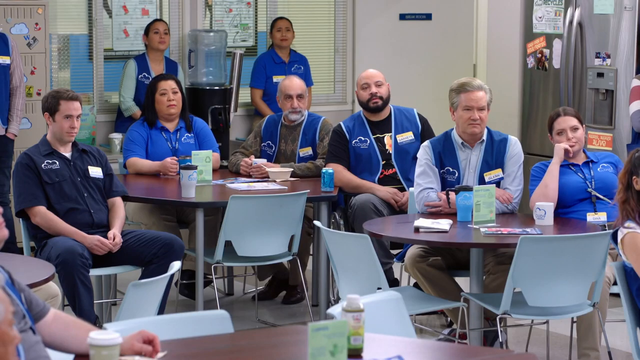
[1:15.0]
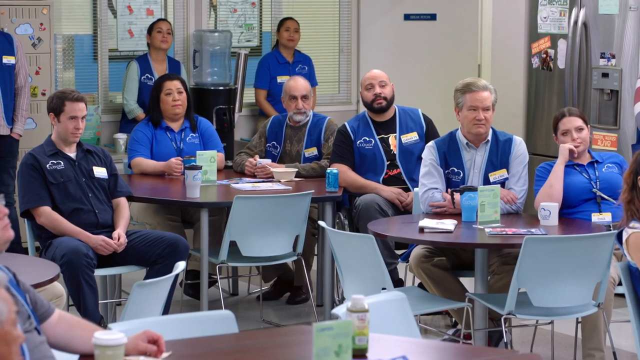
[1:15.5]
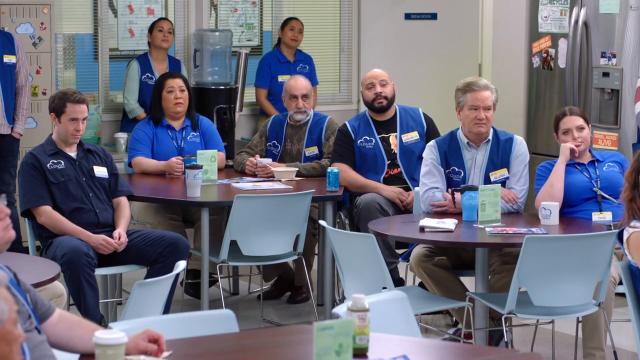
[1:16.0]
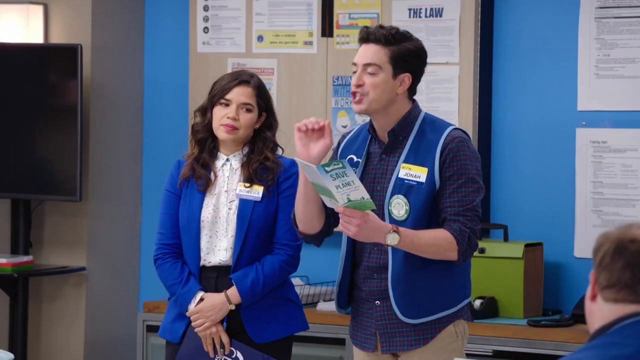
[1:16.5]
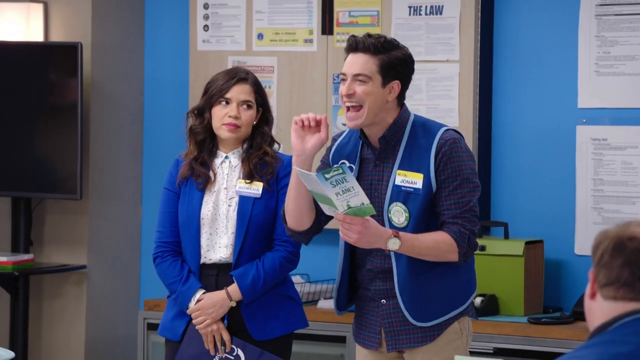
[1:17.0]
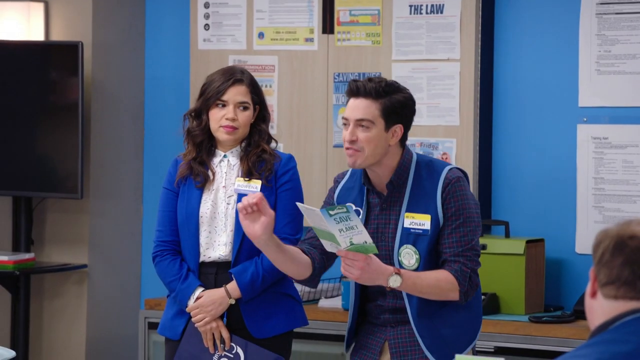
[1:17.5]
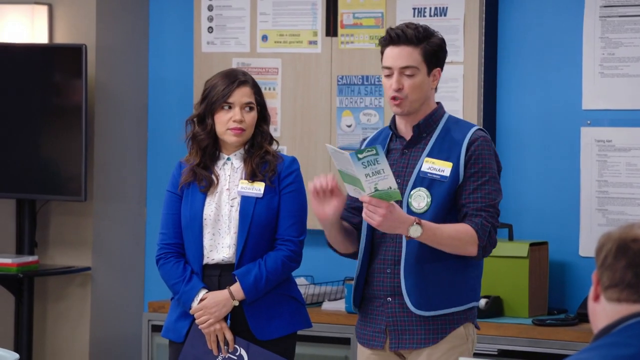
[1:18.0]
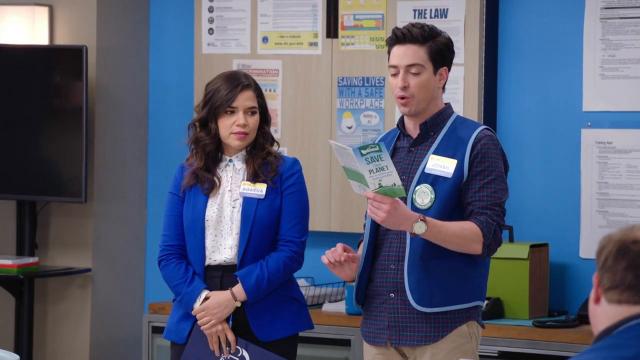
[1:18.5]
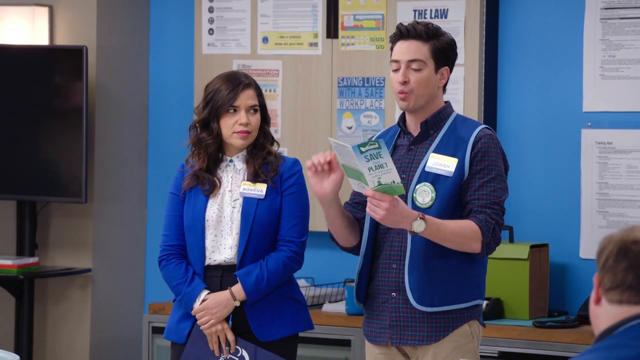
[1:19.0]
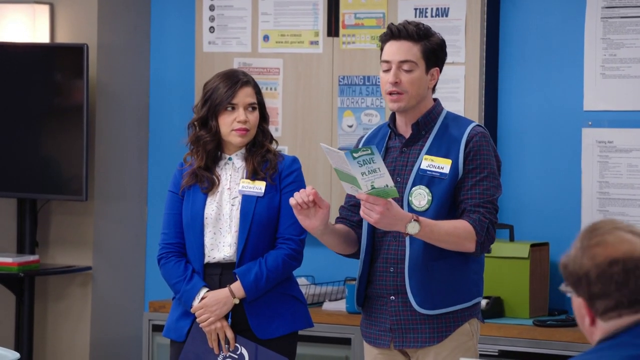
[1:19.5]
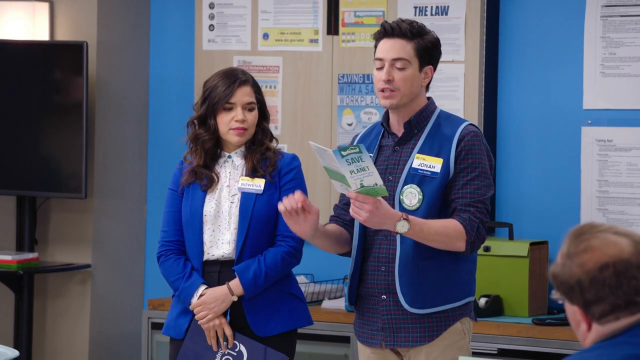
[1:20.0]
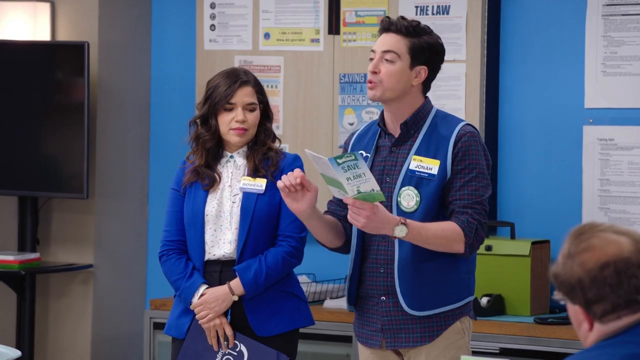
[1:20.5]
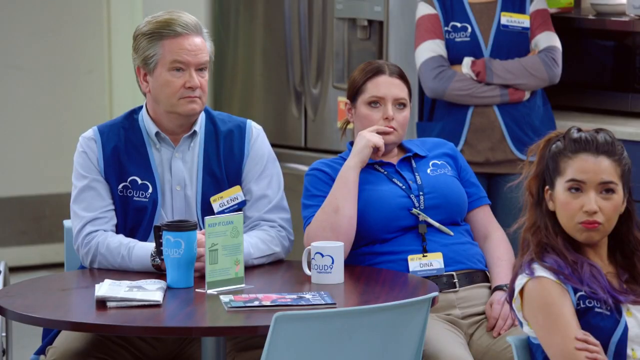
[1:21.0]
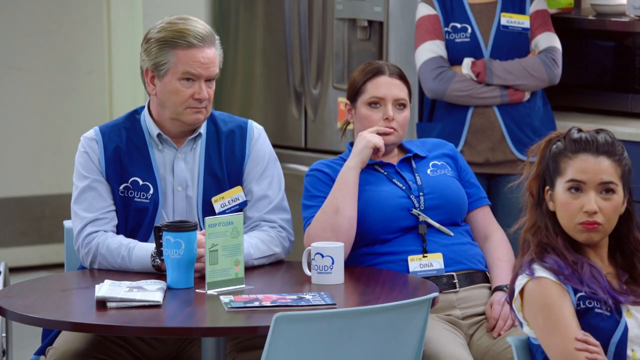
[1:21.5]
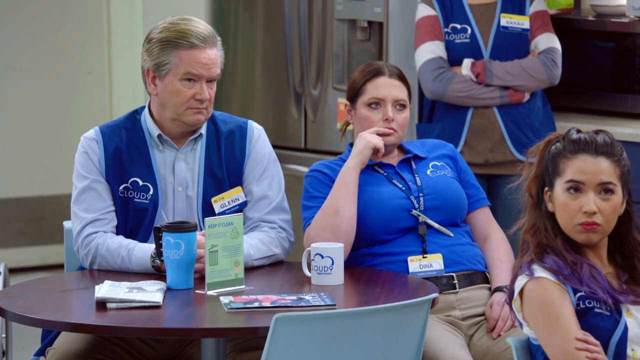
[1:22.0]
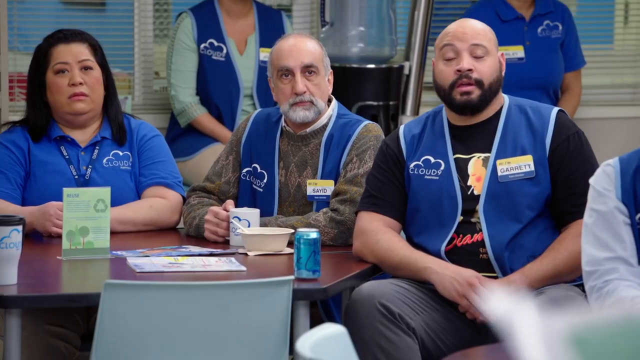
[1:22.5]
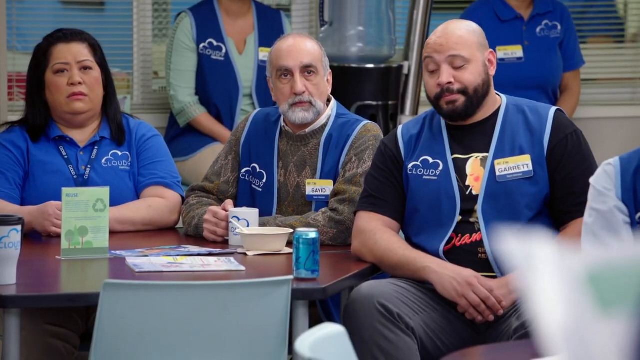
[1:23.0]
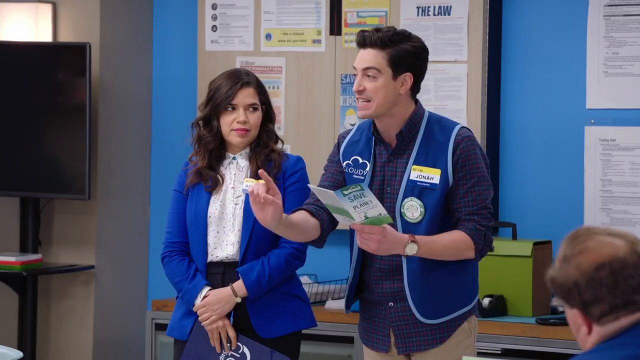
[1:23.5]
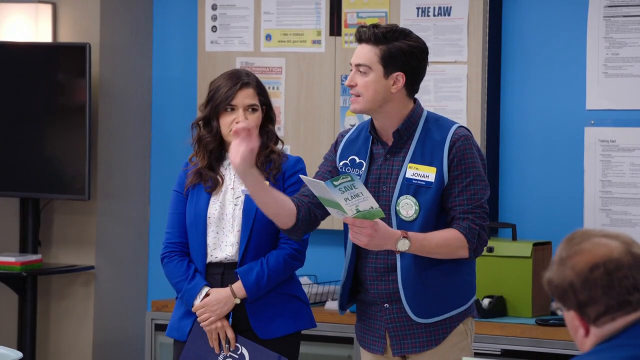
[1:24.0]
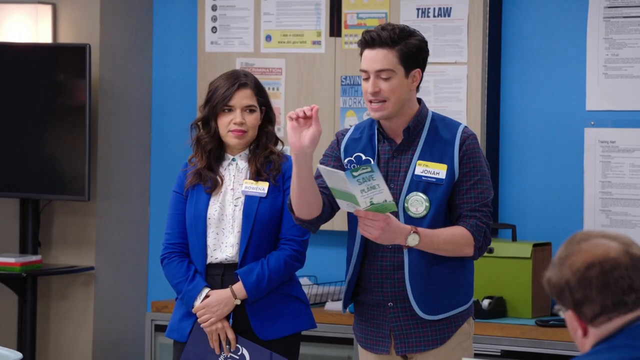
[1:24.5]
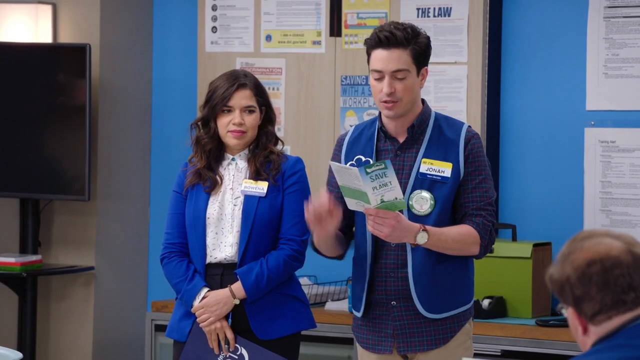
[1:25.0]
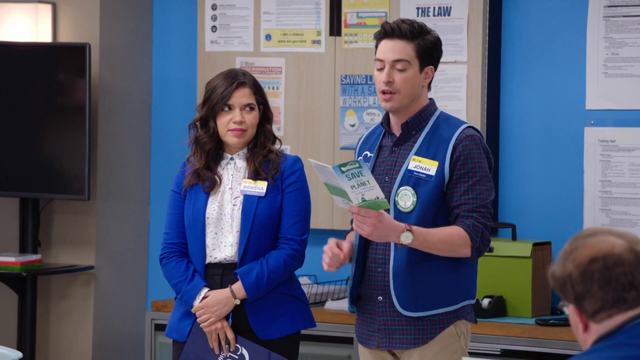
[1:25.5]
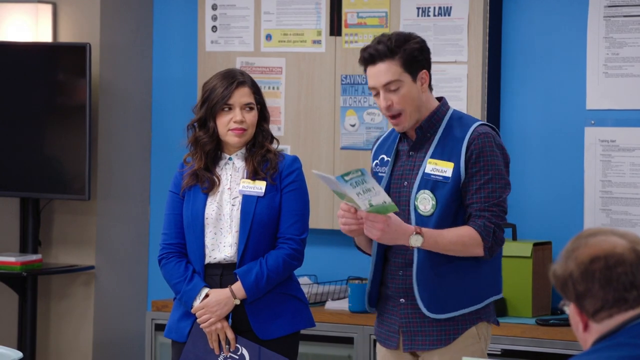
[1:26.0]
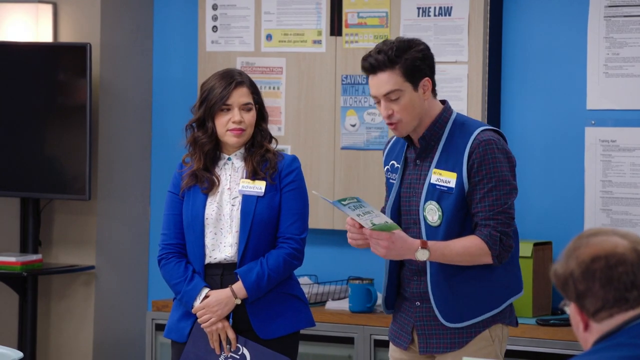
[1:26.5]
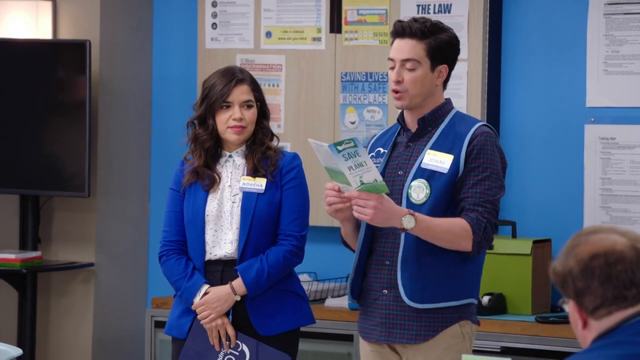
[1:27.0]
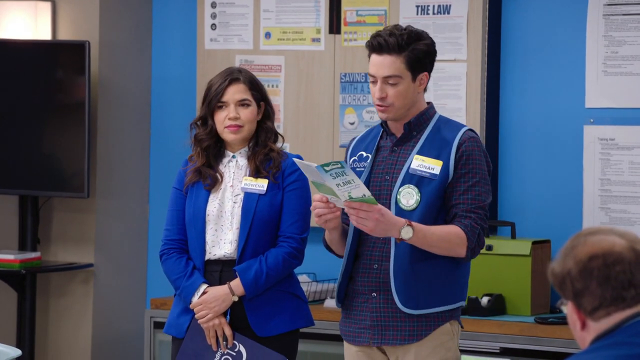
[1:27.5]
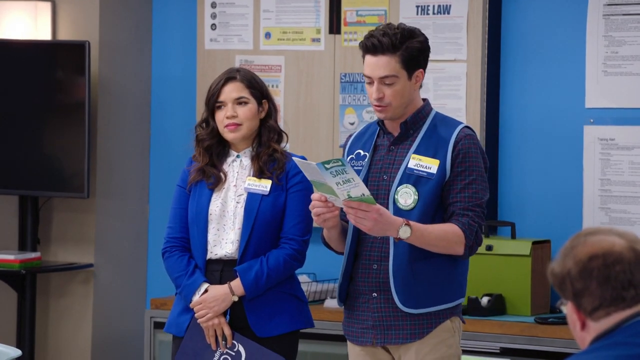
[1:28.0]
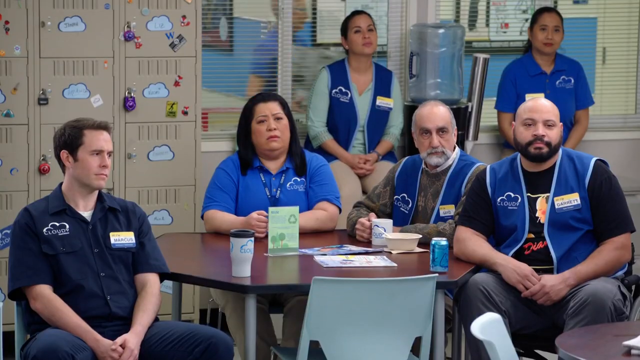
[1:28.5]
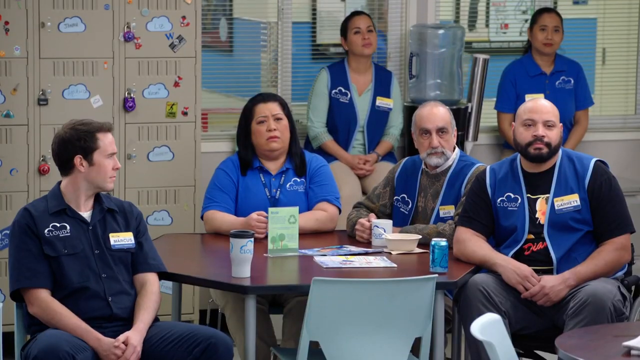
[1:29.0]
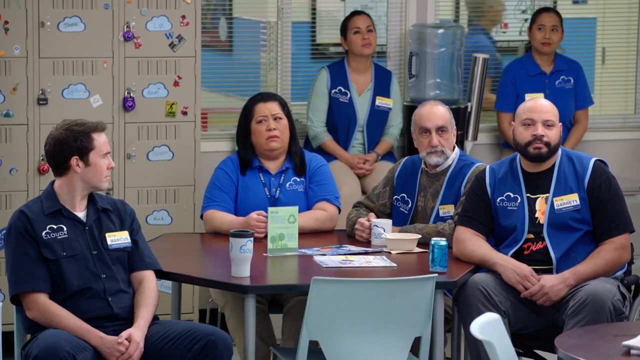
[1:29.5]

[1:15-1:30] The seated audience all have neutral expressions, as if bored or unconcerned. The camera pans to a man and a woman standing at the front of the room; the man holds a blue, white and green brochure reading "Save the Planet" in blue text. Standing on her right, he reads from the brochure using hand gestures and body movements, as if convinced of what he is reading and making sure the audience knows it is important. The scene cuts to an old man and woman sitting, looking a little more interested, and pans to another table of four people who also seem a little more interested. It pans back to the two at the front, the man still reading and leaning his head inward as if to focus on the text.